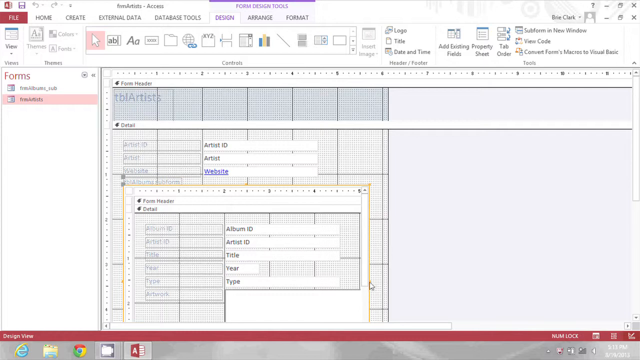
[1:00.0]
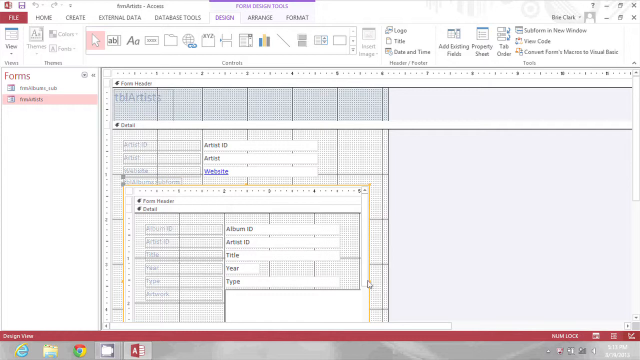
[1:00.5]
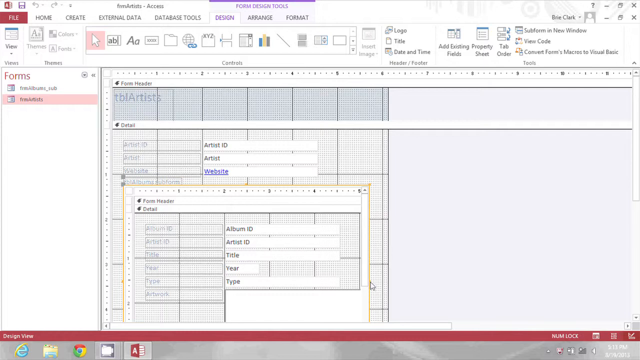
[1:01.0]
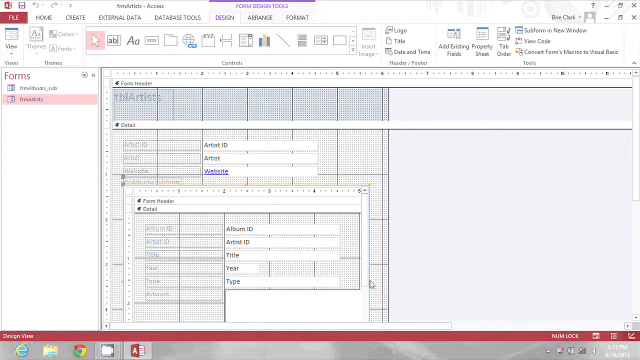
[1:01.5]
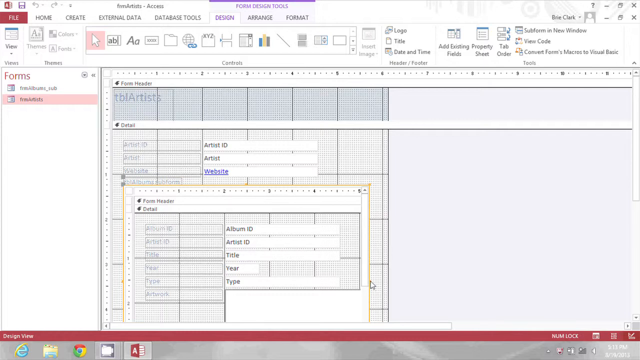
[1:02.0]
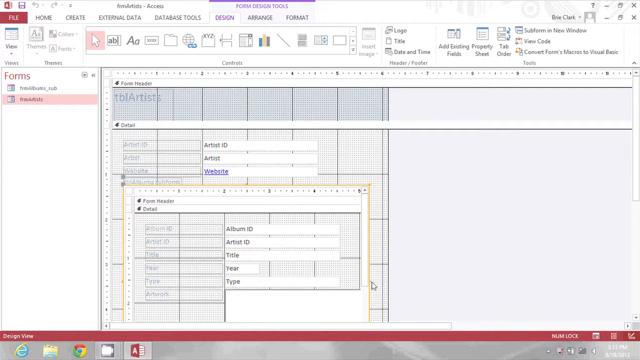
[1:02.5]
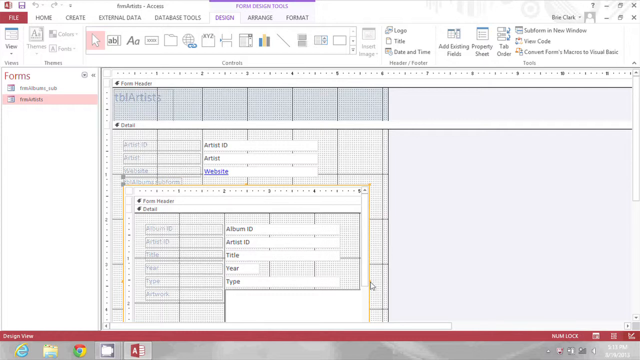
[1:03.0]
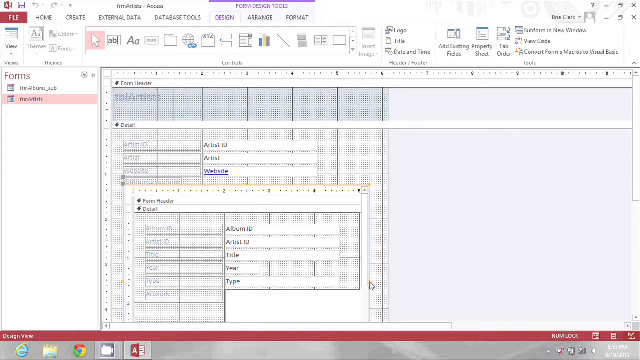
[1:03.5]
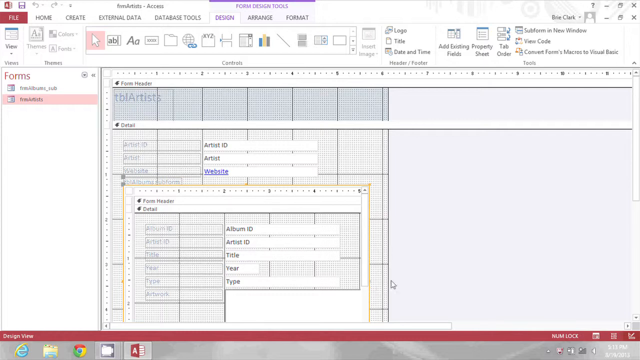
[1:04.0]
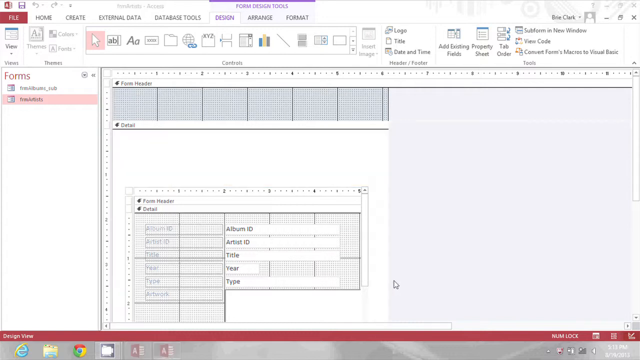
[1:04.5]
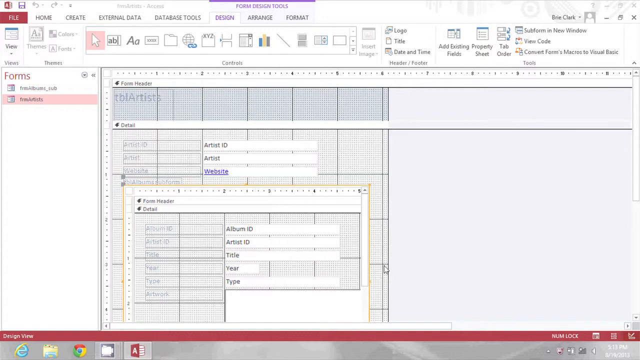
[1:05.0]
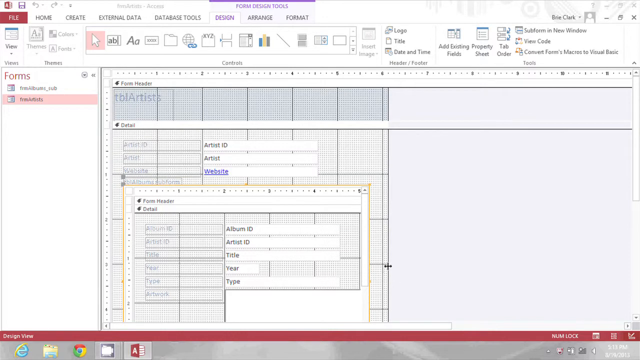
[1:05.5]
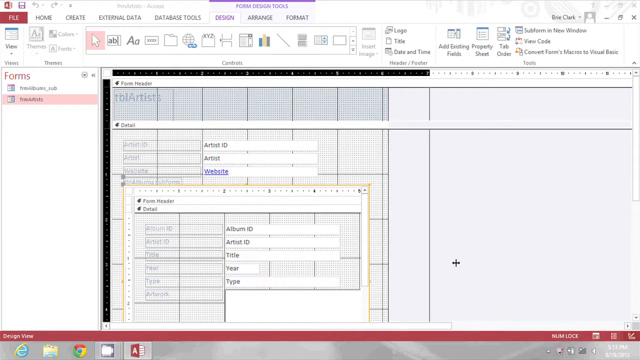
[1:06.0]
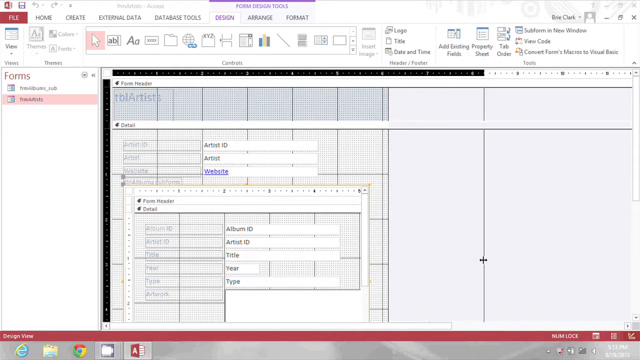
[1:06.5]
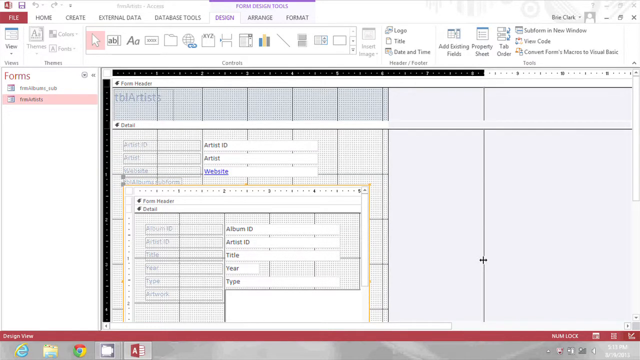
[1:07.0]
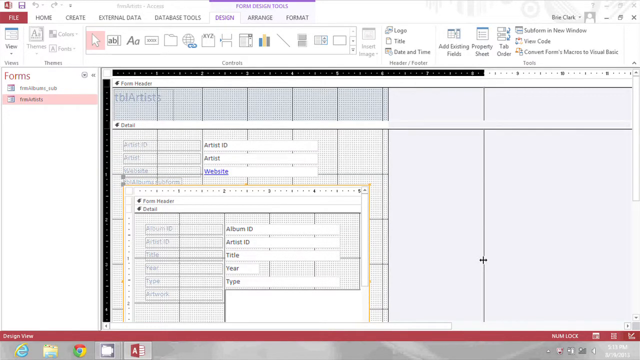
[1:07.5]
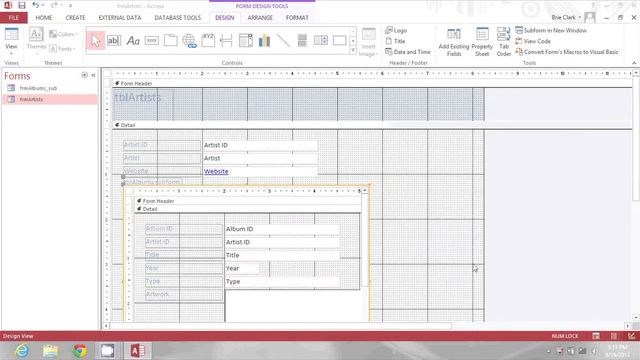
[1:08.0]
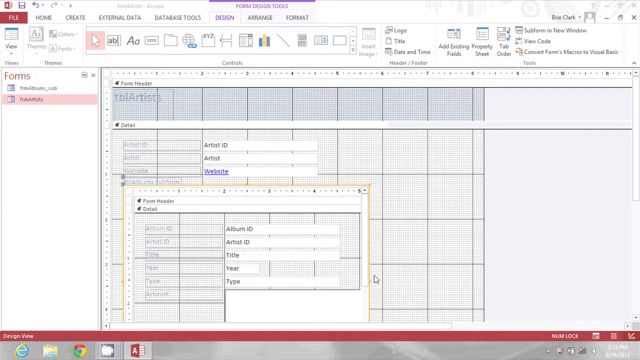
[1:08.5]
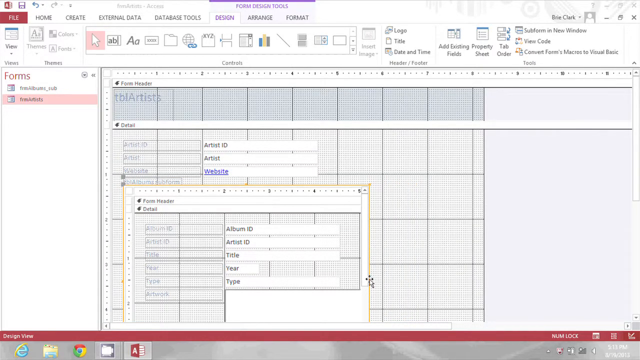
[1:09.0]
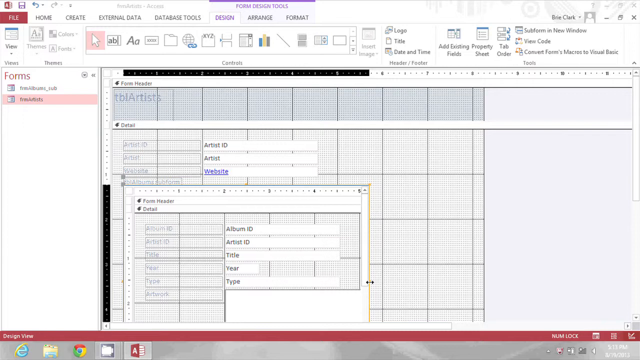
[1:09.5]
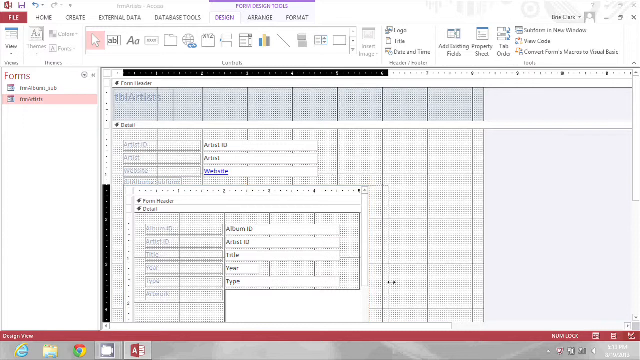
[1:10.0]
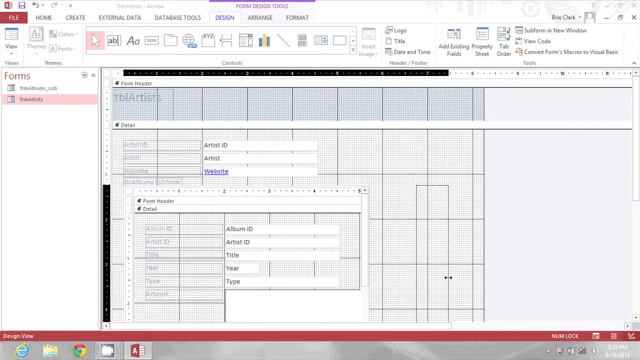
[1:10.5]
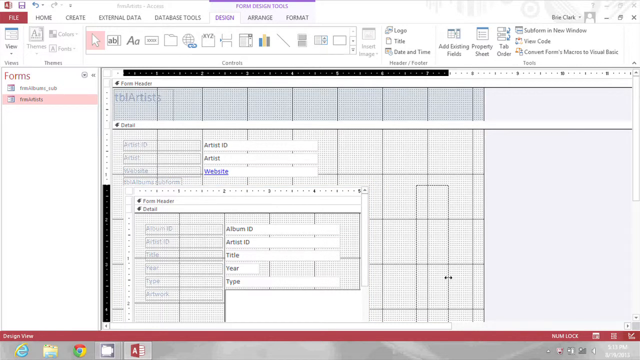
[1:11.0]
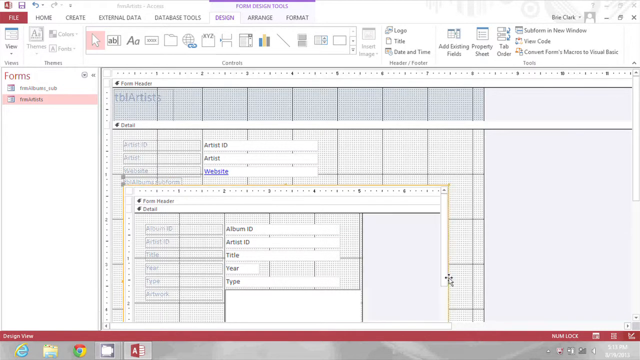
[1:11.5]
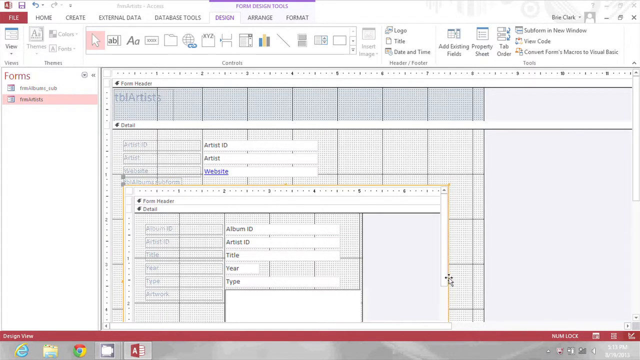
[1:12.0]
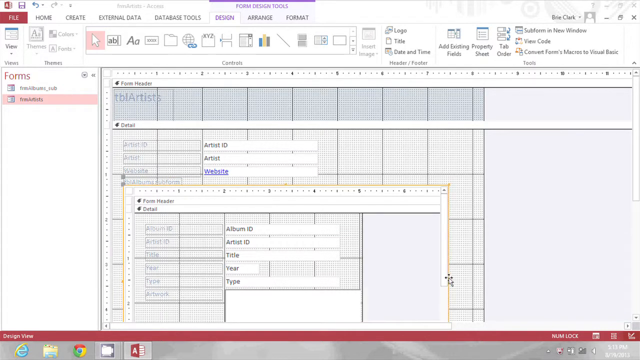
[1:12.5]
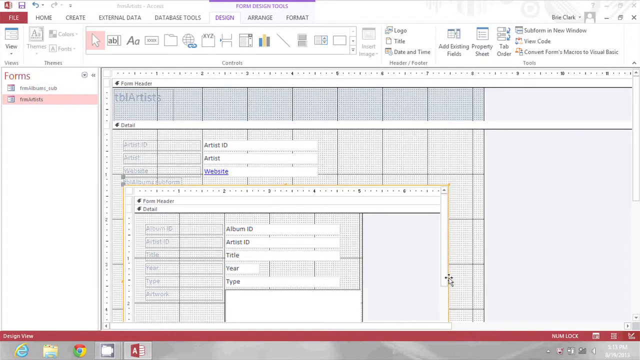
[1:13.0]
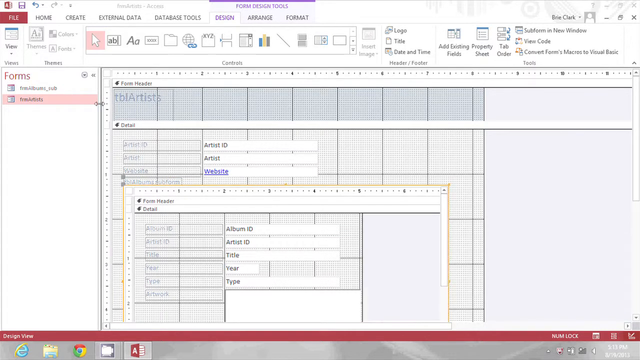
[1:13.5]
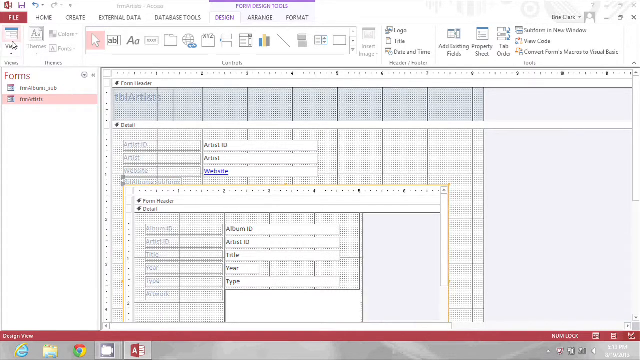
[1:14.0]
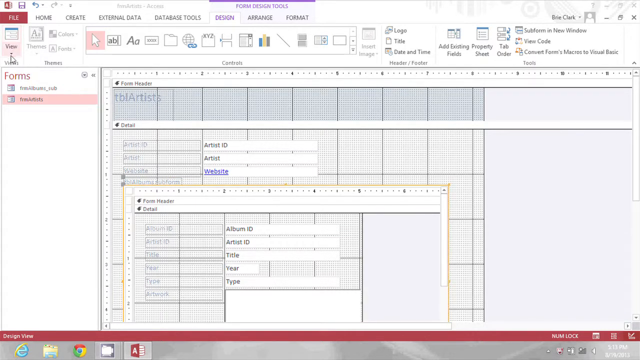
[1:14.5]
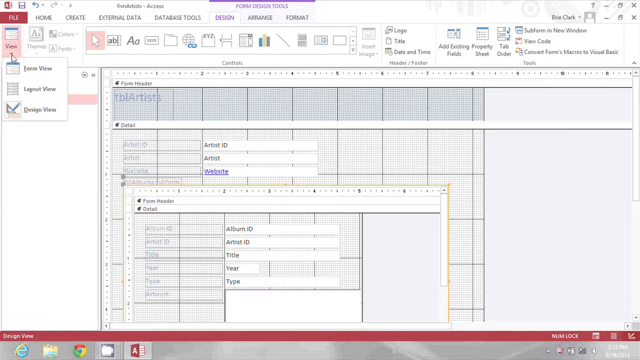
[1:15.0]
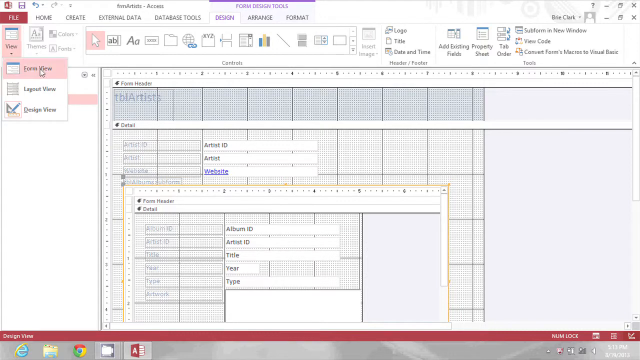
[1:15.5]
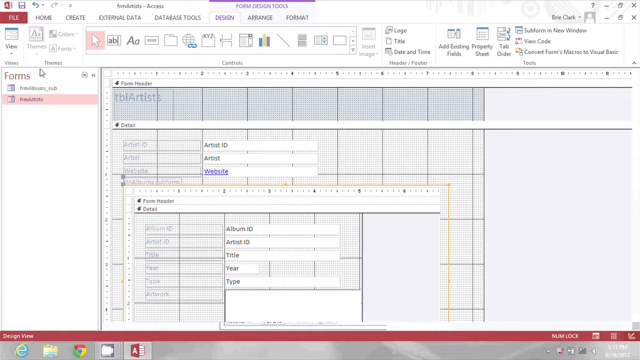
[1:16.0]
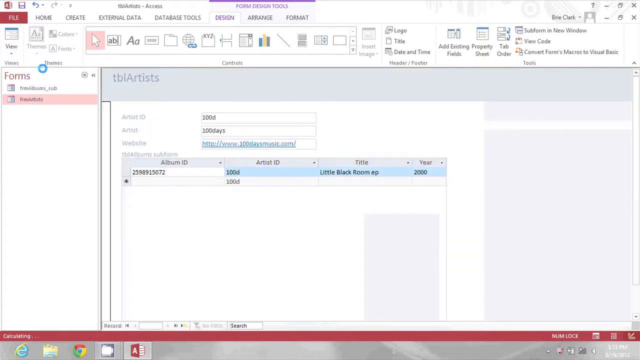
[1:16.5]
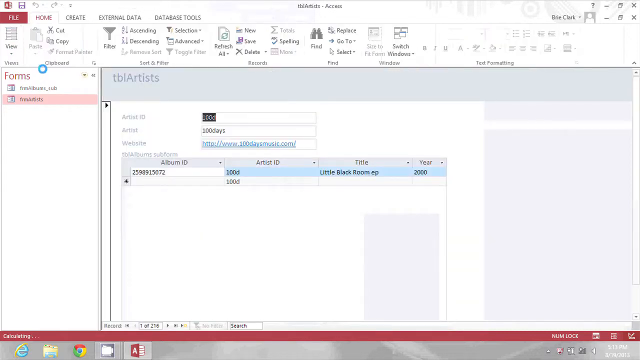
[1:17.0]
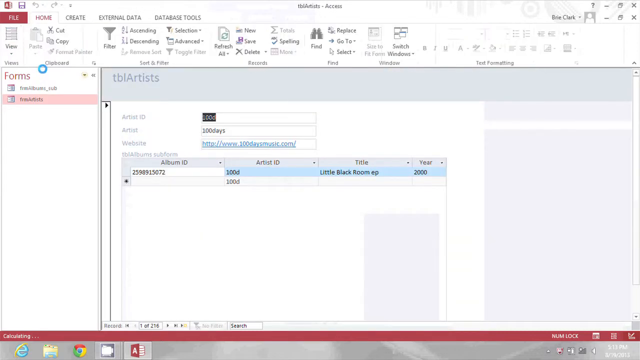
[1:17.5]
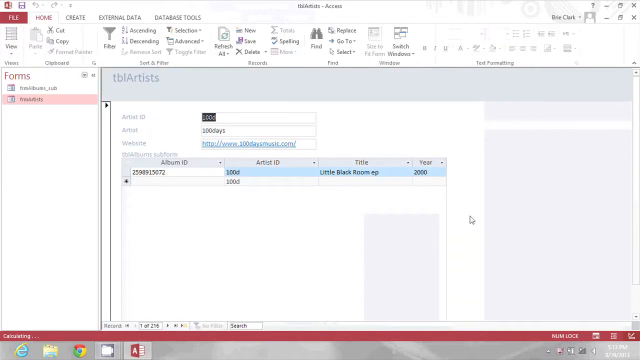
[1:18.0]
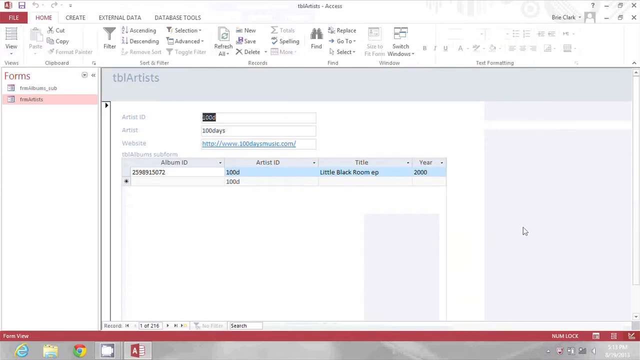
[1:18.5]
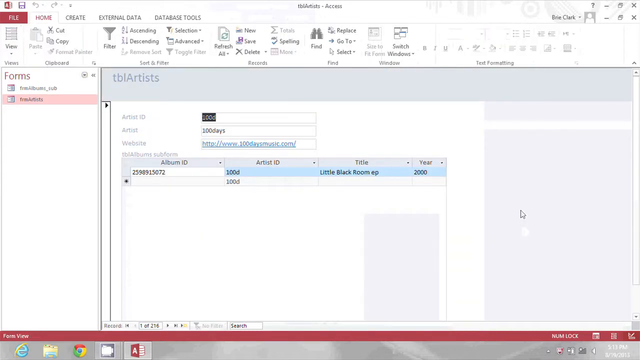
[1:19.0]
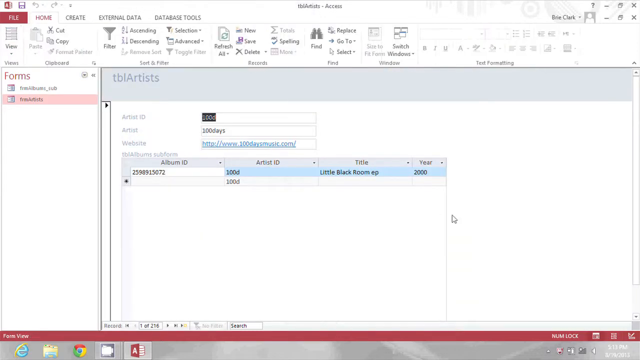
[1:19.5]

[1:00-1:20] The same woman, with black hair and a black shirt, is shown with her black chair and black computer, but the picture is not visible. She is creating graphs. The page shows "100 days of music" as a website, "www.100daysofmusic.com", the artist ID as "100 D", the title "Little Back Room EP", and the year "2000". She is working on something related to music, but the graphs are hard to make out and their colours are confusing. There is kind of a graph within a graph within a graph on a white backdrop: it is all gray, with a graph on the left-hand side and pure gray on the right-hand side. Pop-ups keep appearing in front of the other ones.